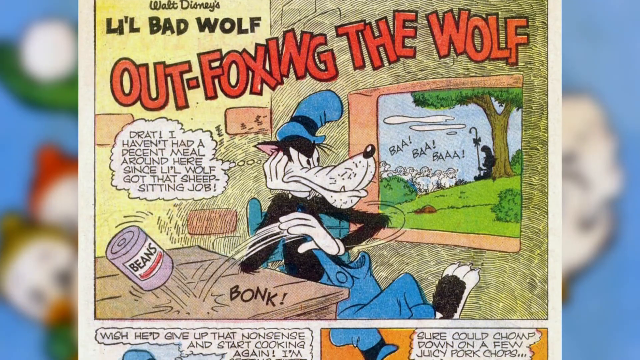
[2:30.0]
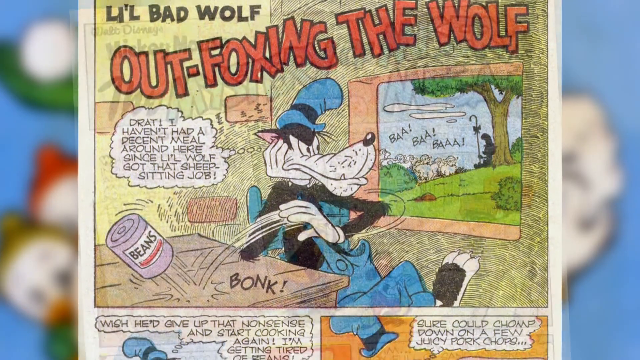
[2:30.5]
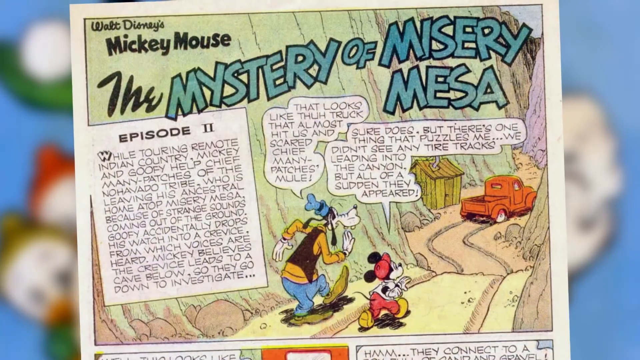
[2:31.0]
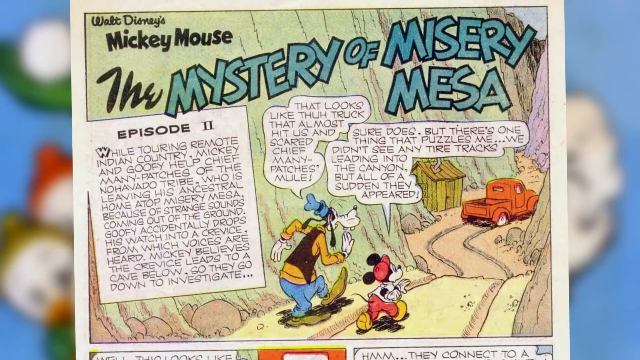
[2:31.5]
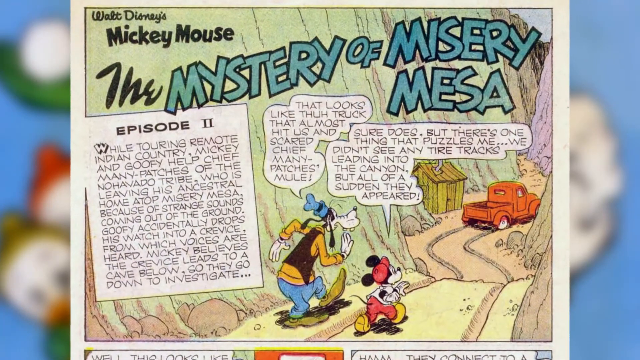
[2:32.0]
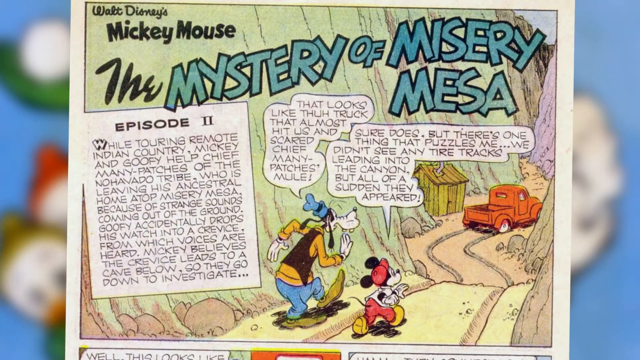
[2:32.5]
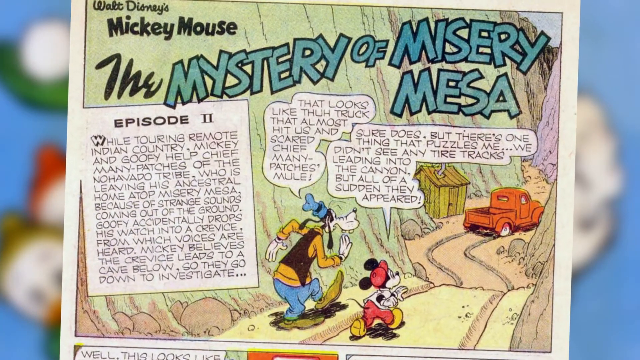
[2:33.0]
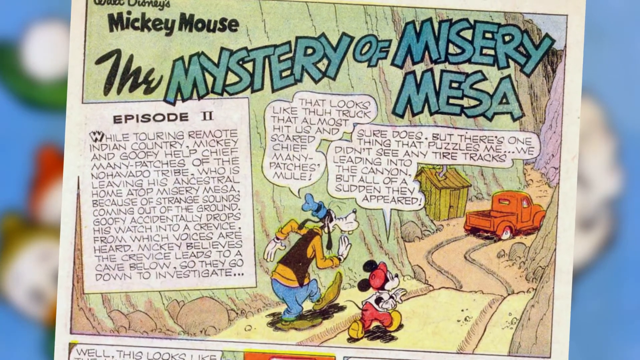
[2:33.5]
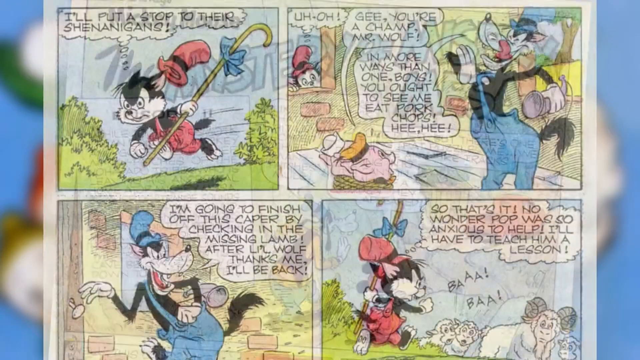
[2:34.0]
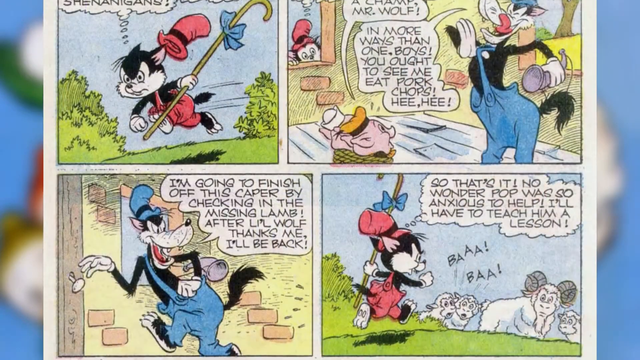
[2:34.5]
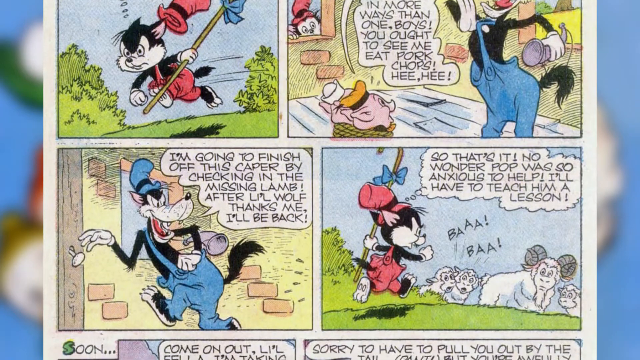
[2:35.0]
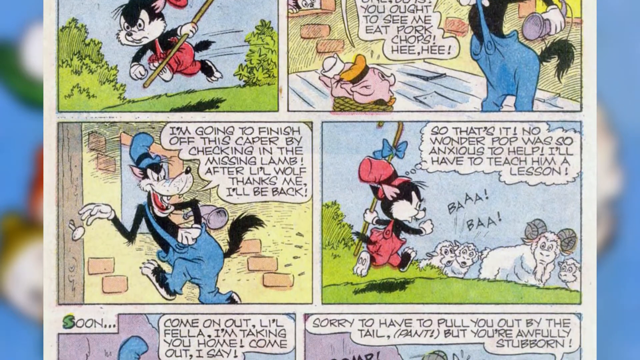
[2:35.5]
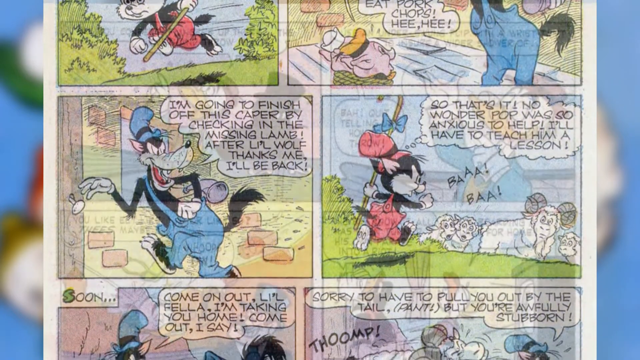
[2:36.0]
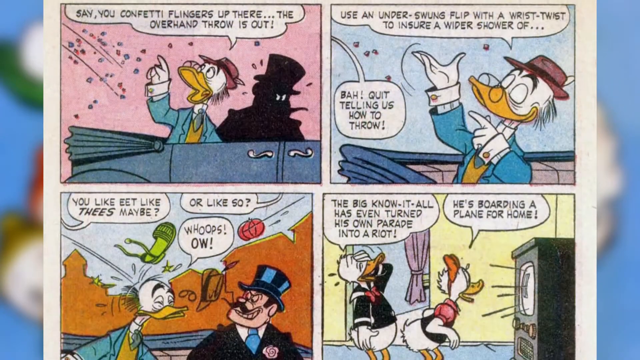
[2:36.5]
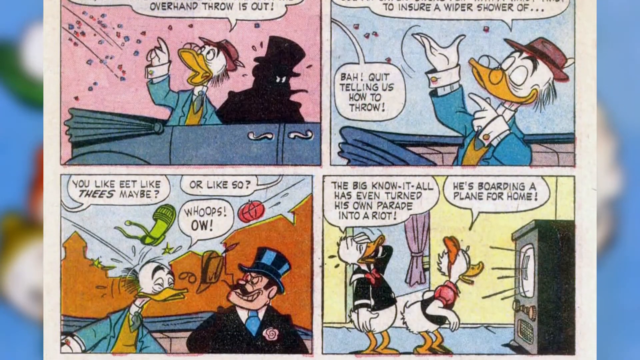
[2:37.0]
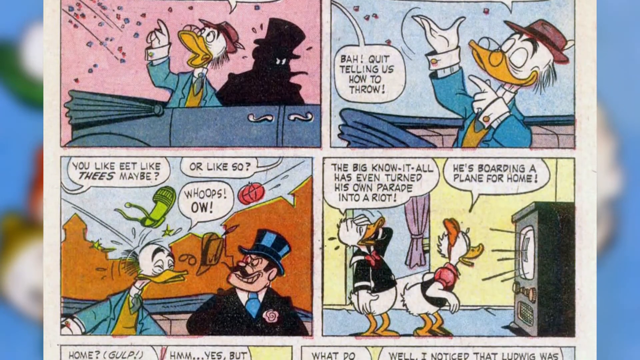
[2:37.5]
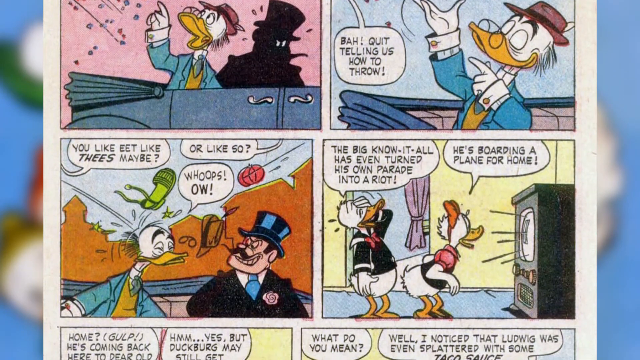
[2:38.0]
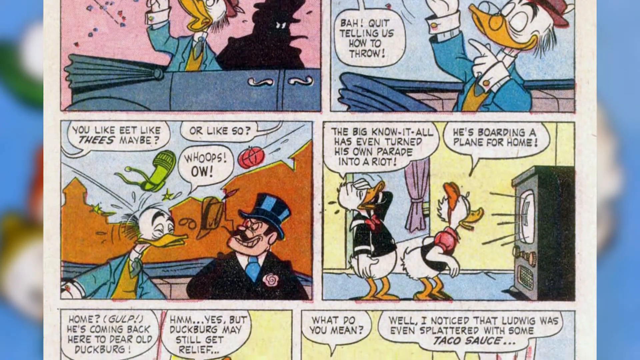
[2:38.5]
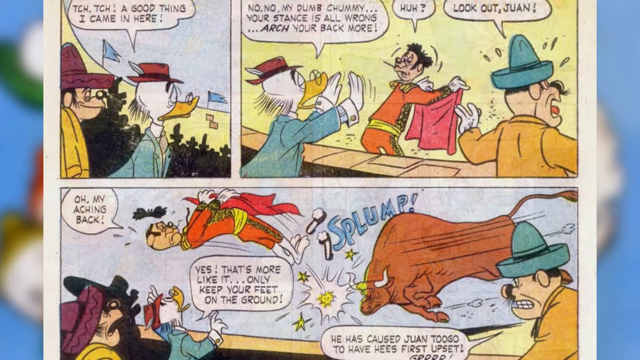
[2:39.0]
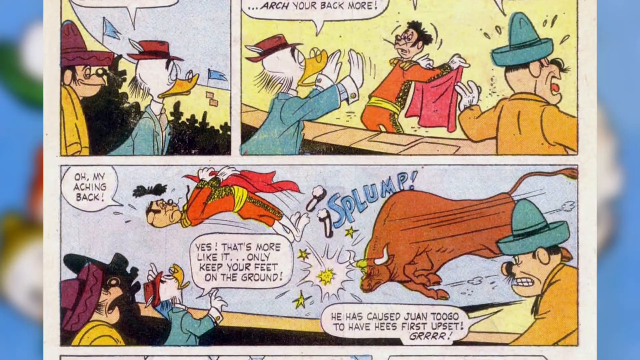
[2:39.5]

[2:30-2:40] Different comics continue, starting with Walt Disney's Lil Bad Wolf Out Foxing the Wolf, which seems to be an alternate version of the three little pigs and the big bad wolf. Next is a comic featuring Mickey Mouse and Goofy called The Mystery of Misery Mesa, showing the two characters walking down a path next to a mountainous area. A few more comic strip images follow, one featuring the little bad wolf with some sheep and pig characters, and another featuring a rich duck character along with Daffy and Daisy Duck. It seems to tell some type of story in which they go to a matador show where the matador is wrangling a bull, and a kind of dramatic scene shows the bull hitting the matador, who goes flying into the crowd as an audience of ducks and other animals looks on.